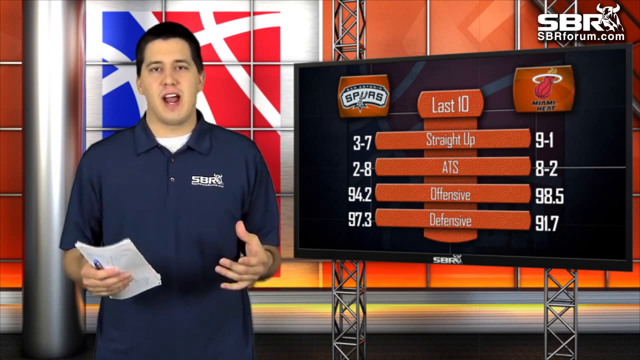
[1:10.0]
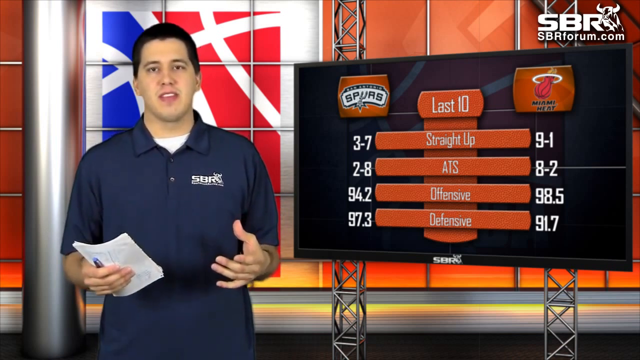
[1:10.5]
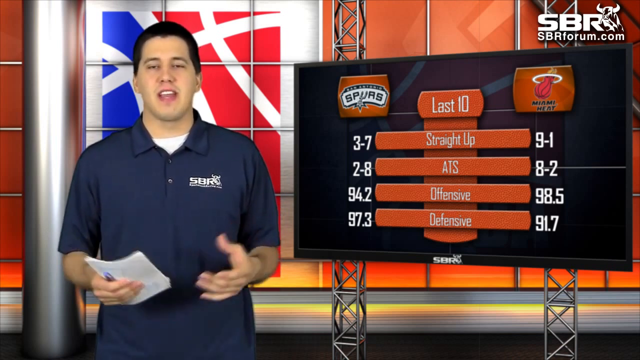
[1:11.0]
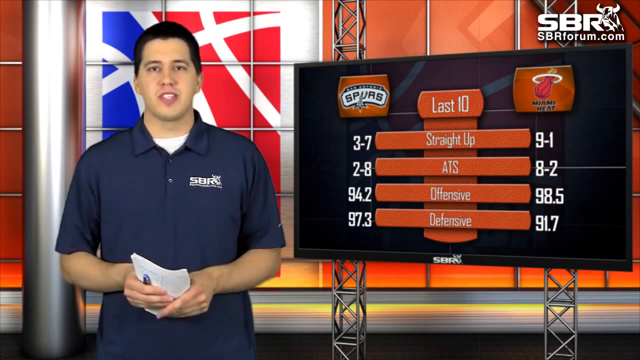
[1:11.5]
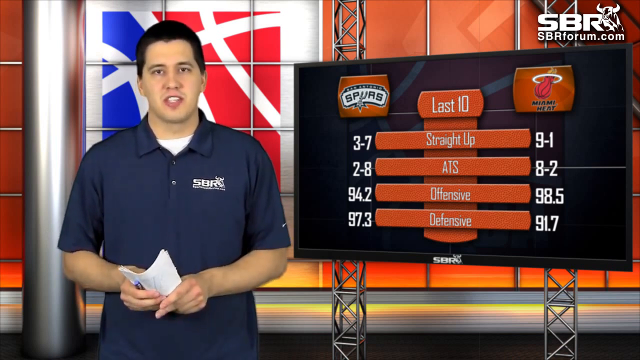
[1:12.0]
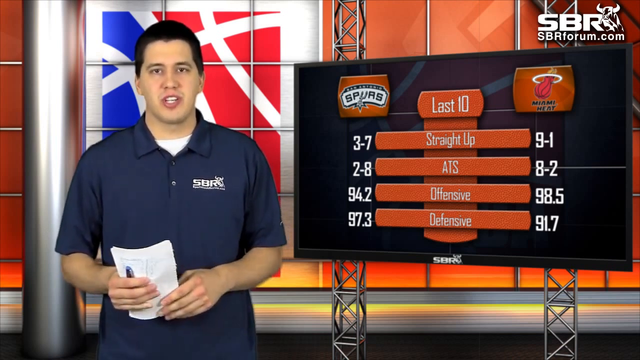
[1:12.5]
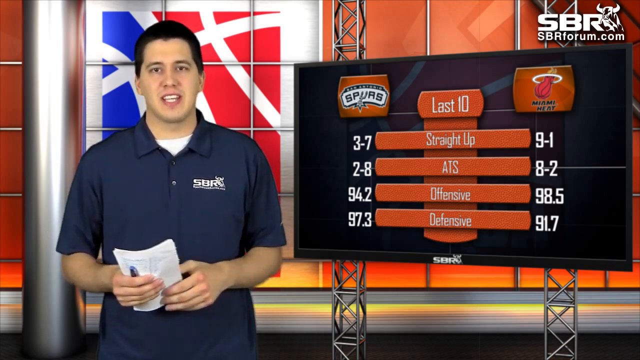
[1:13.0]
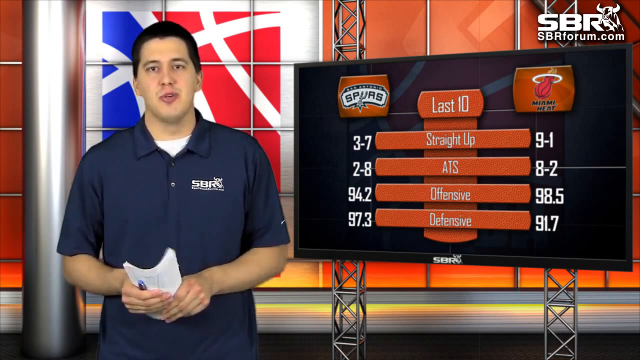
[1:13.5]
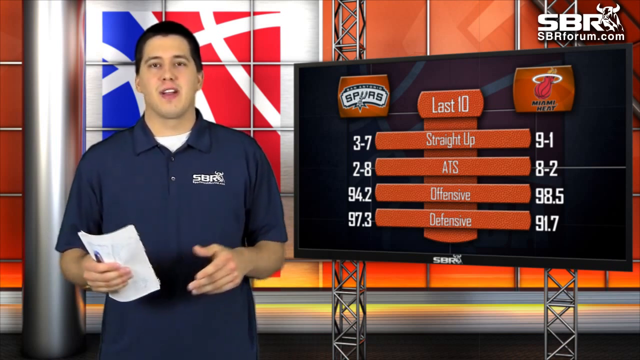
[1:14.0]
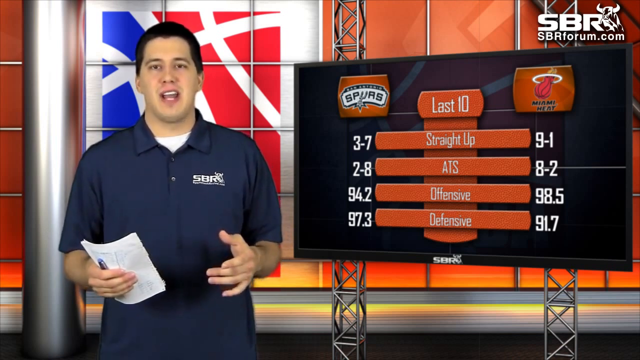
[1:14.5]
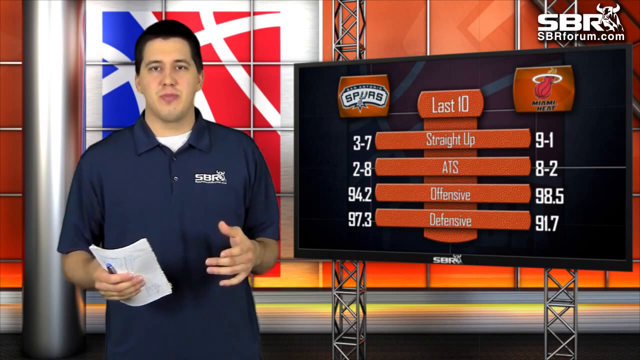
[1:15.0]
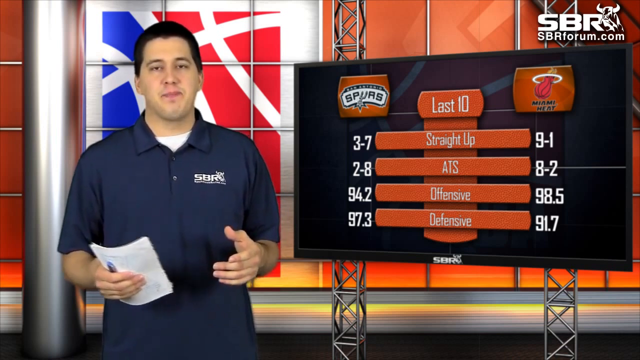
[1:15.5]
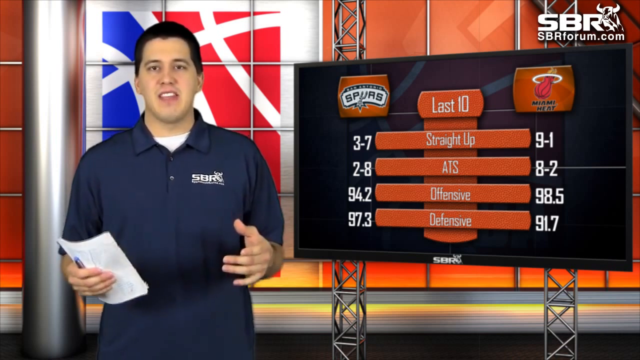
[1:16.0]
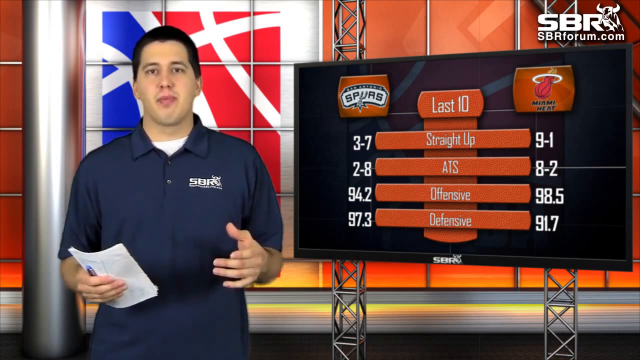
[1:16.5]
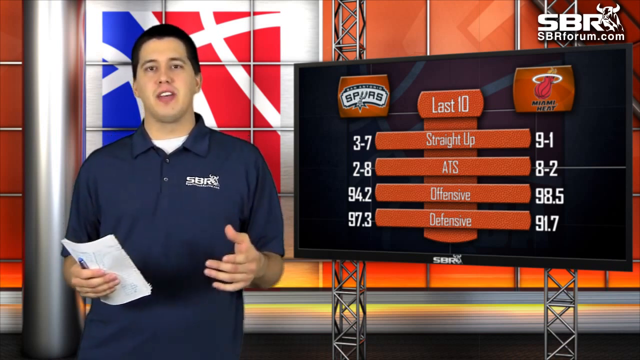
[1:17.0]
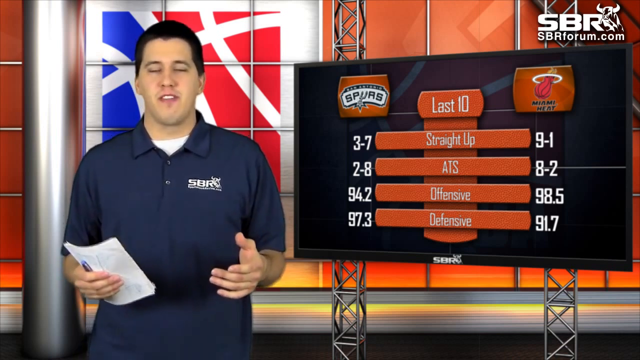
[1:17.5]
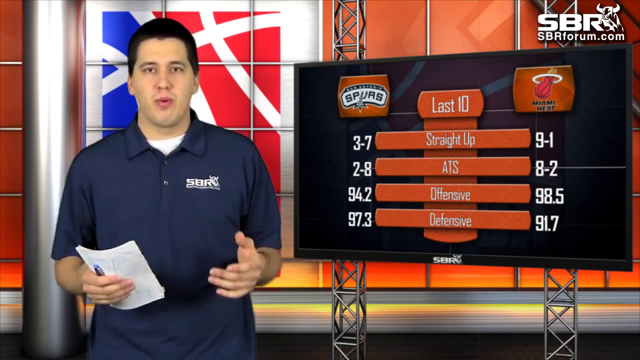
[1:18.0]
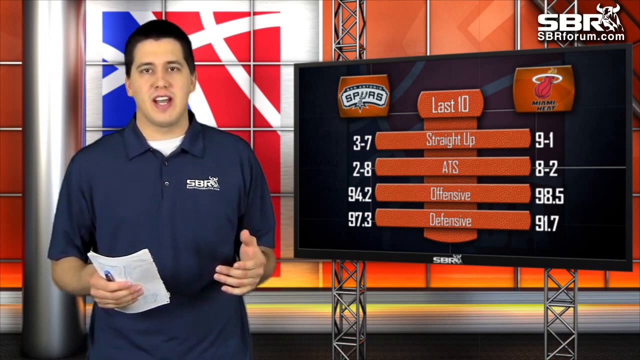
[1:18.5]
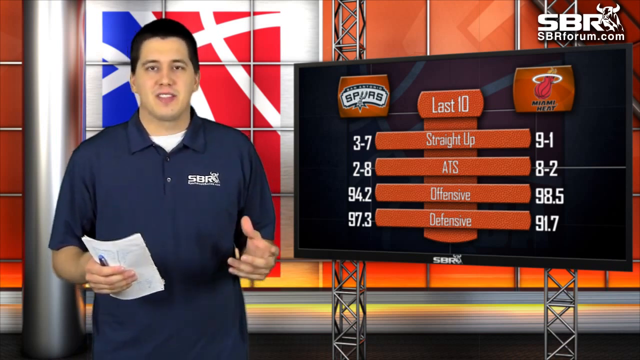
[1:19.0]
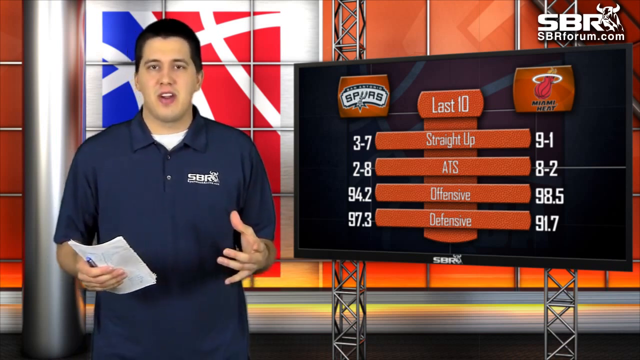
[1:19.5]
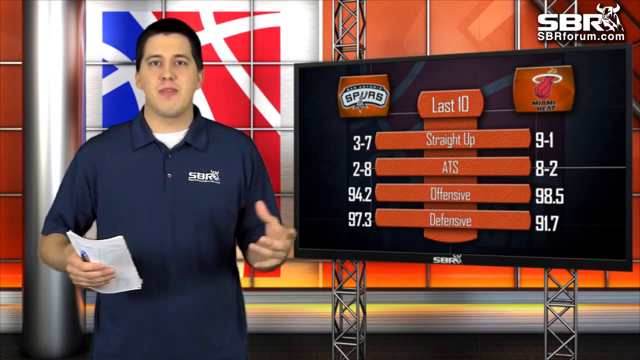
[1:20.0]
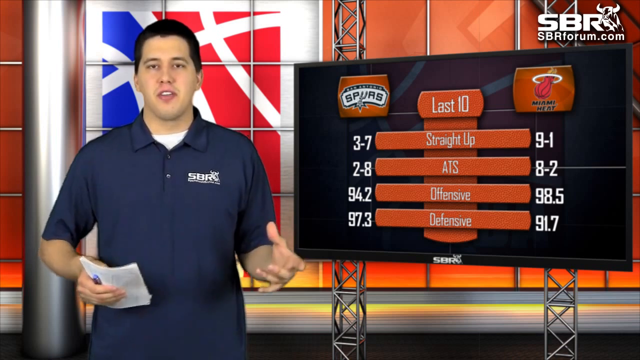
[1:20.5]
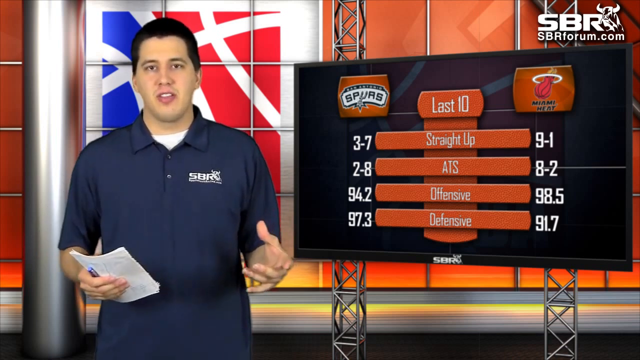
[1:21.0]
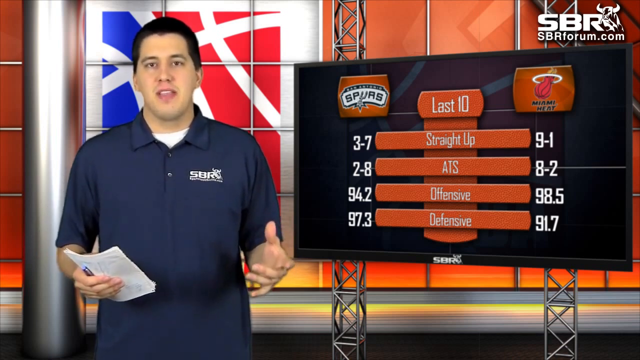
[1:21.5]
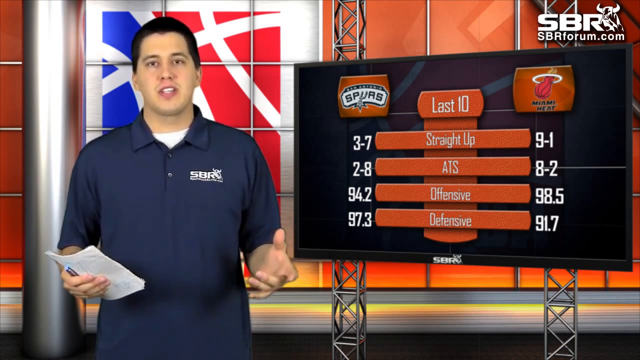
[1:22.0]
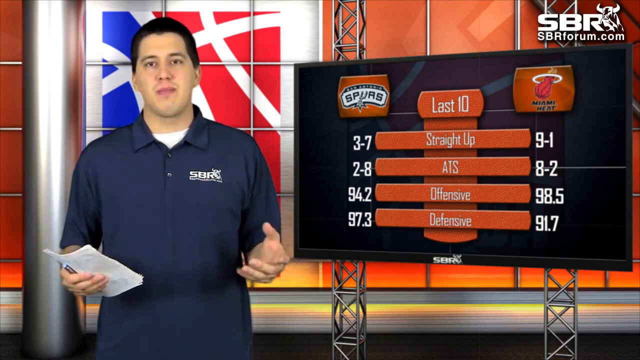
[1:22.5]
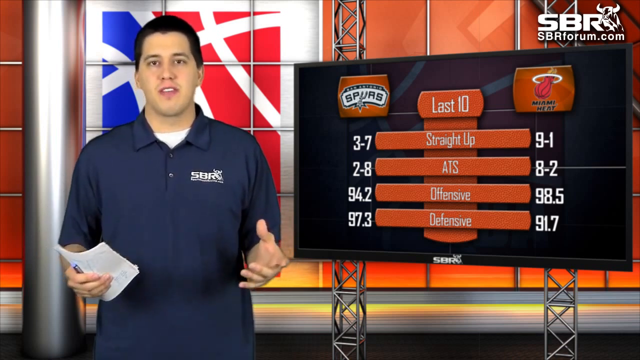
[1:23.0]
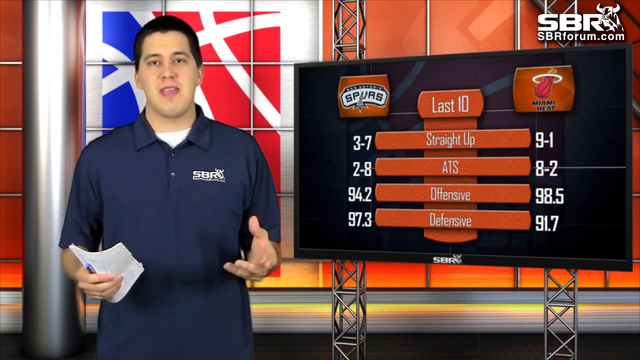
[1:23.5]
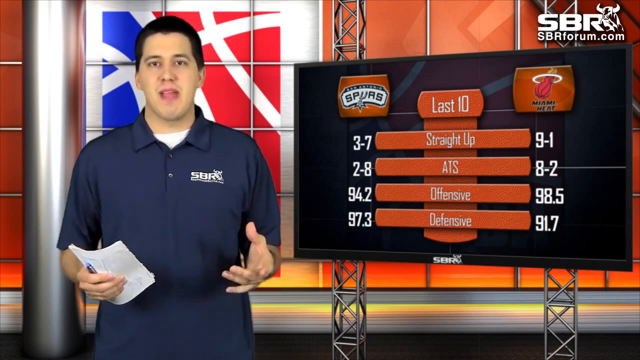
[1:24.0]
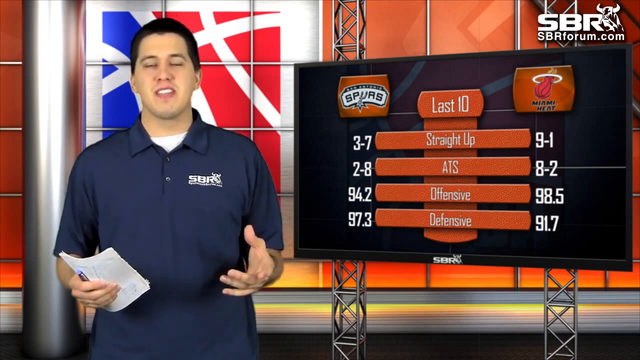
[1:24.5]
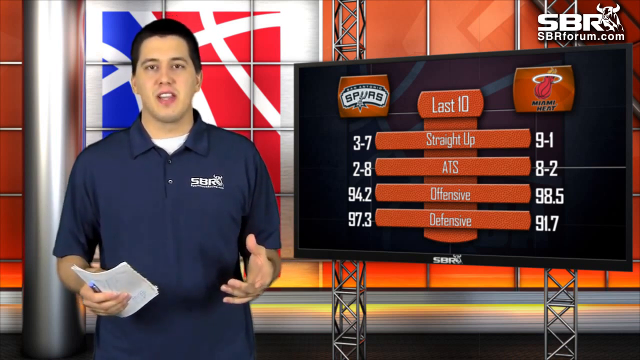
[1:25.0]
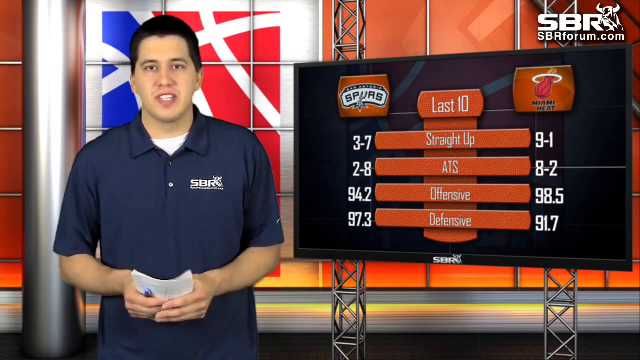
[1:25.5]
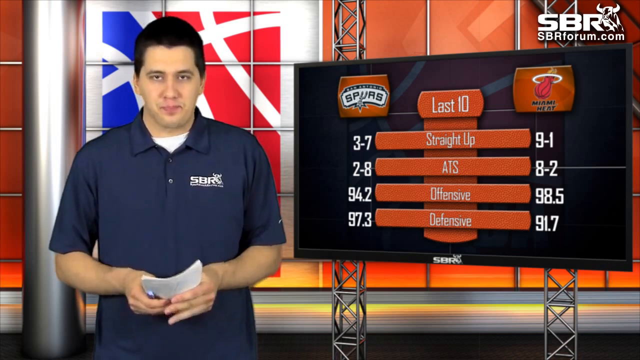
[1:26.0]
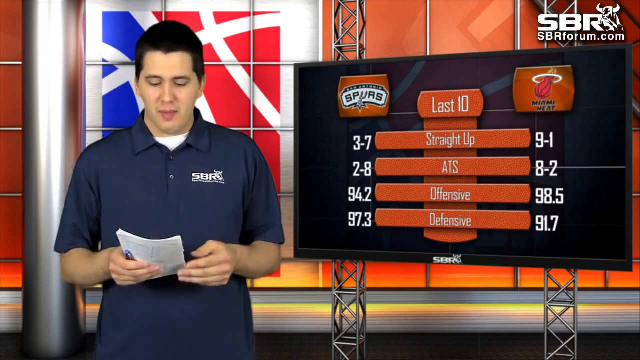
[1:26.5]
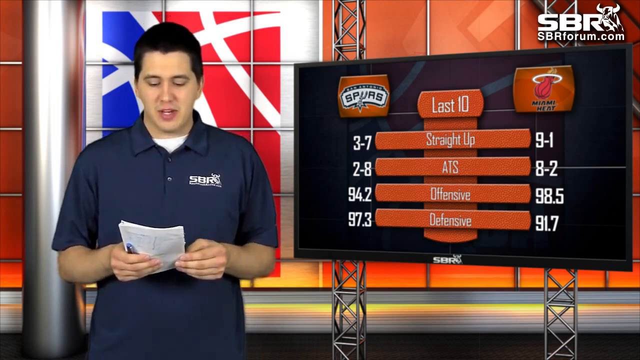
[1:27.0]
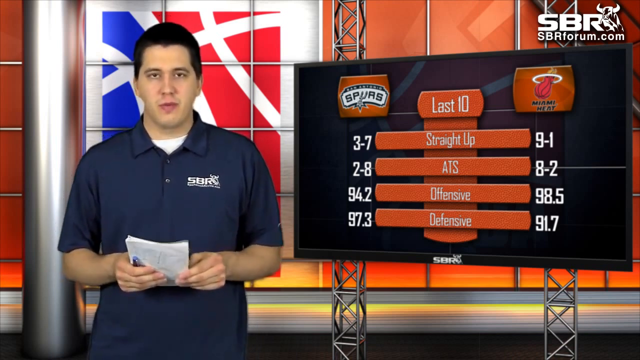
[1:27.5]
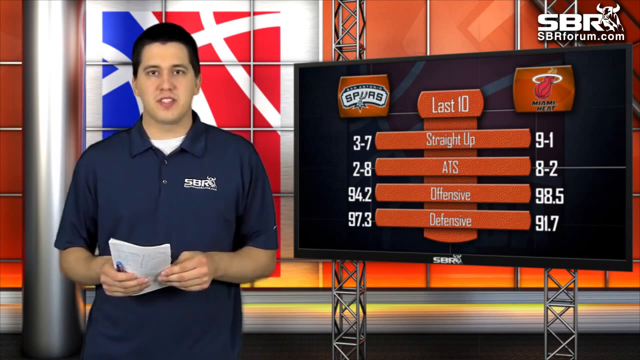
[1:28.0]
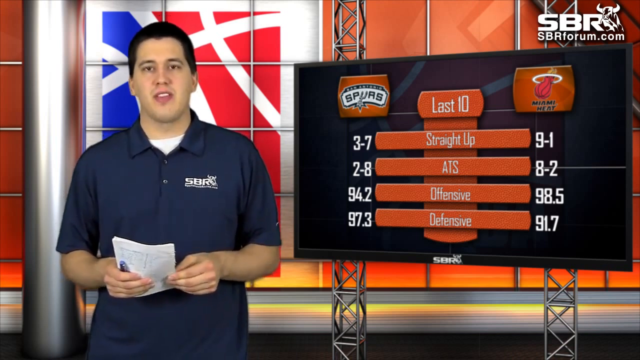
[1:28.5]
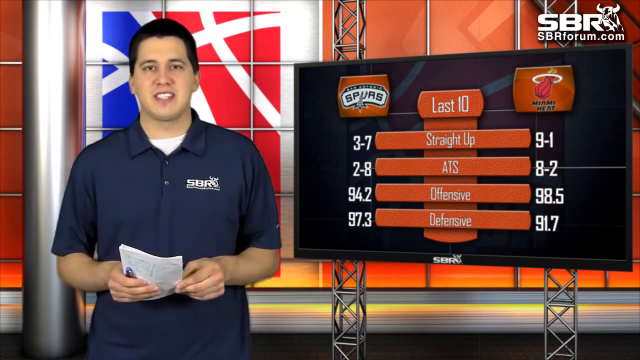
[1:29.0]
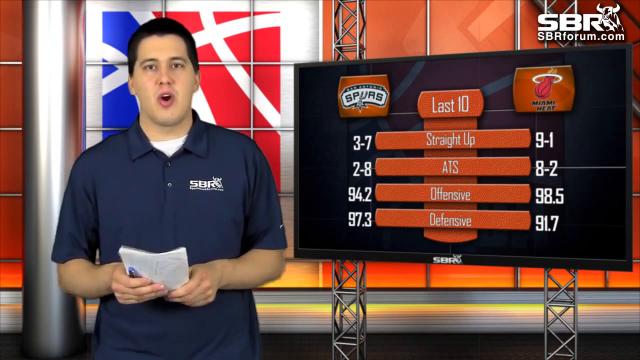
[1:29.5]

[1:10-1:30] A Caucasian man talks to the audience, wearing a blue polo shirt over a silver-white t-shirt, with a basketball in the background on the left side of the screen. On the right side, a comparison between the Miami Heat and the other team shows straight up, ATS, offensive and defensive figures in four rows. The top right of the screen says "SBRForum.com" along with a poll. The man on the left talks directly to the audience while holding a pen and paper in one of his hands.